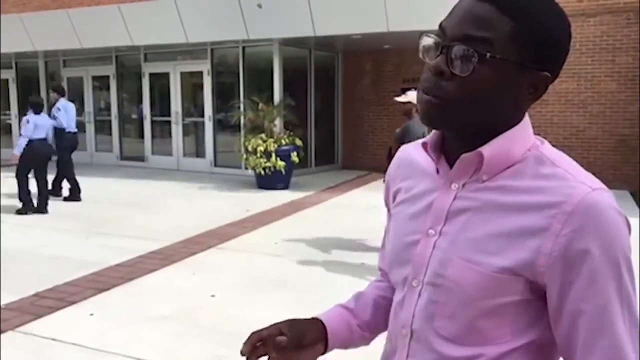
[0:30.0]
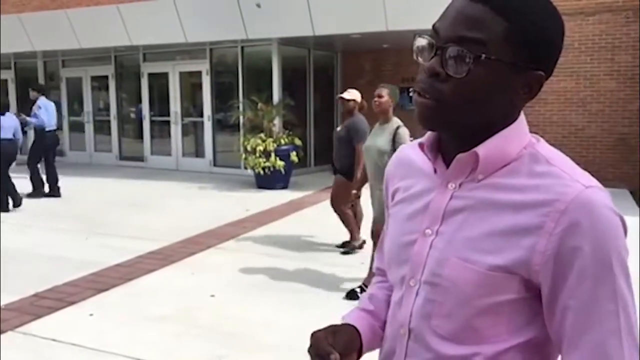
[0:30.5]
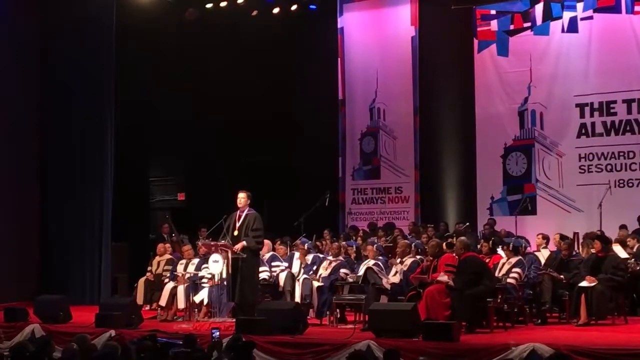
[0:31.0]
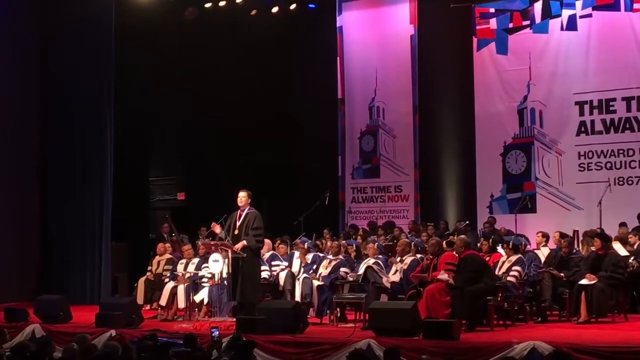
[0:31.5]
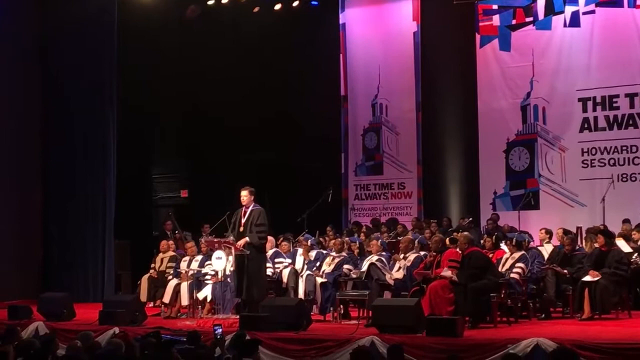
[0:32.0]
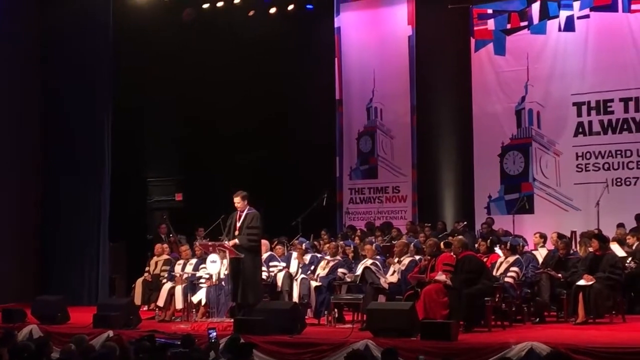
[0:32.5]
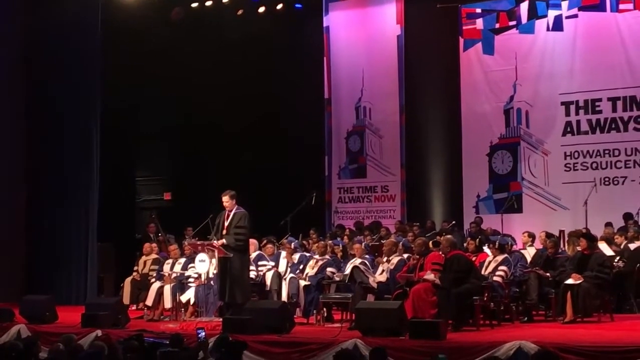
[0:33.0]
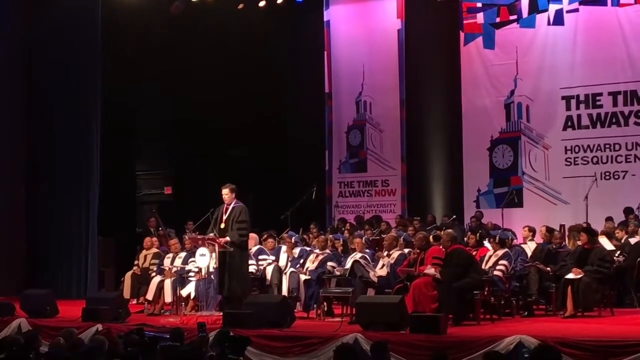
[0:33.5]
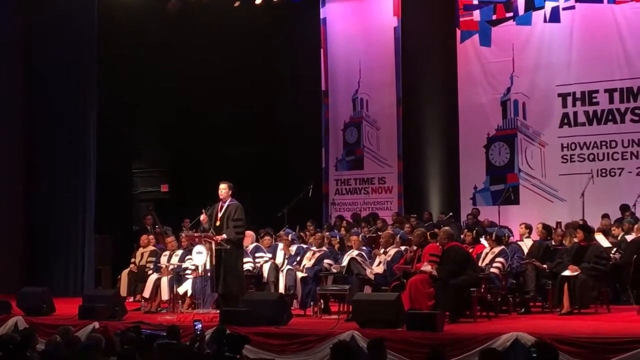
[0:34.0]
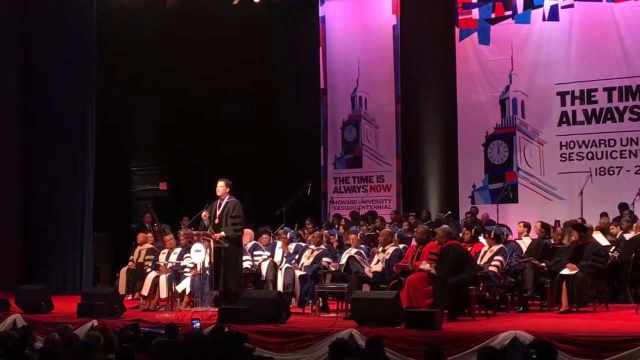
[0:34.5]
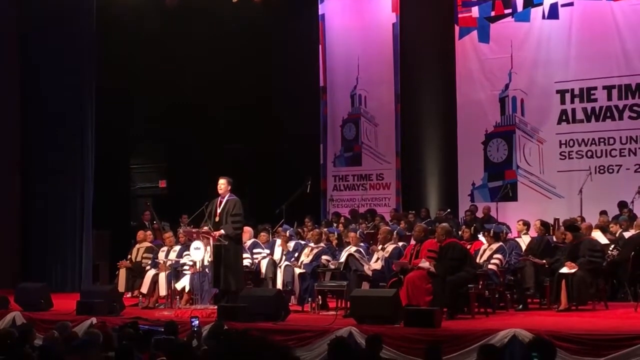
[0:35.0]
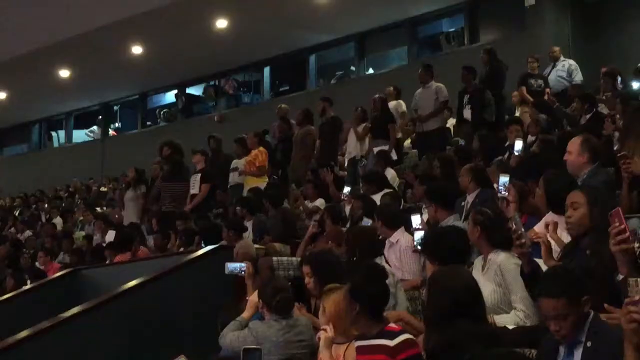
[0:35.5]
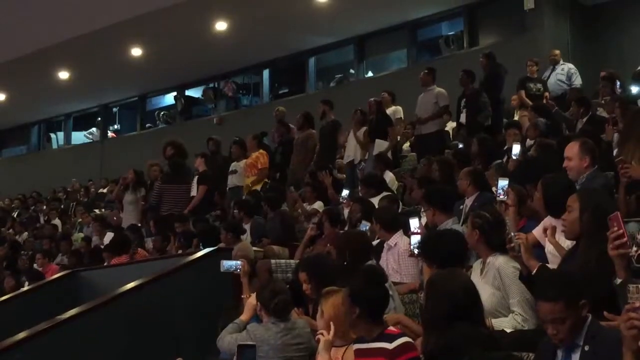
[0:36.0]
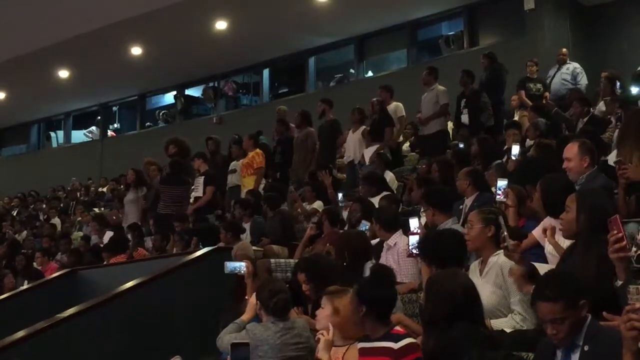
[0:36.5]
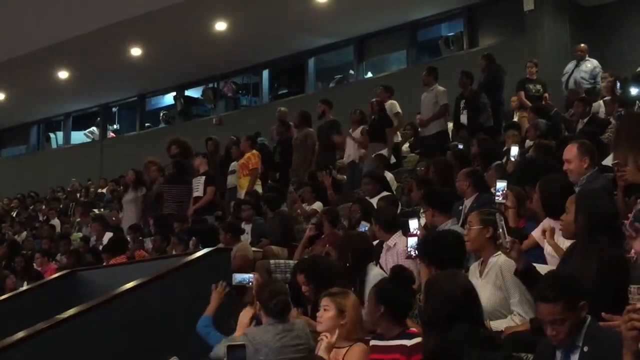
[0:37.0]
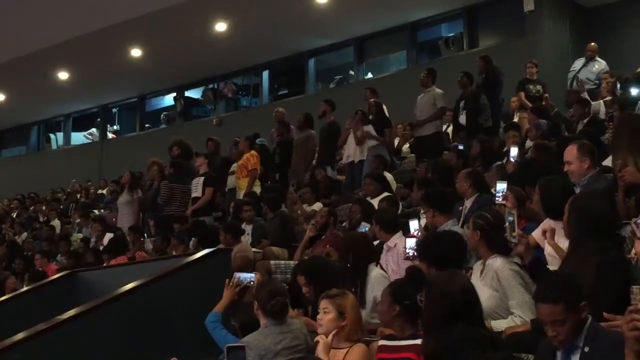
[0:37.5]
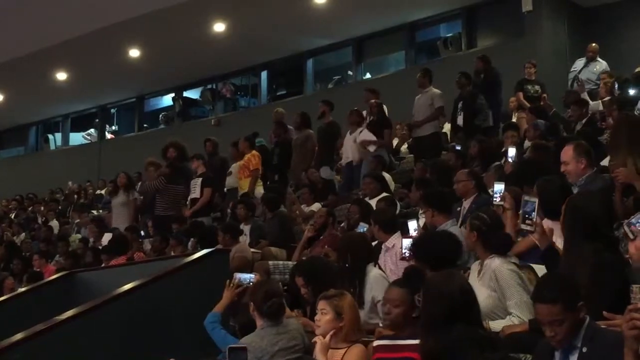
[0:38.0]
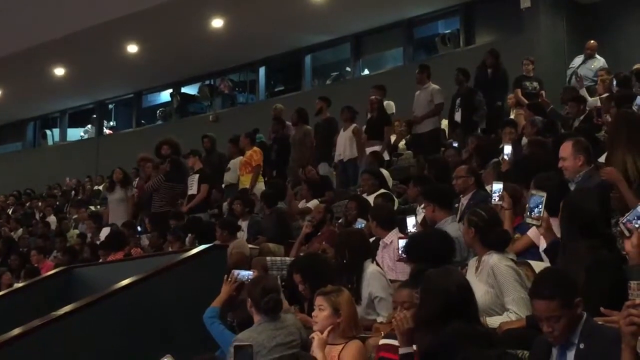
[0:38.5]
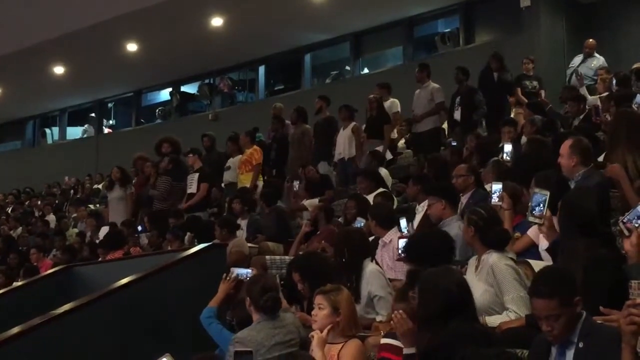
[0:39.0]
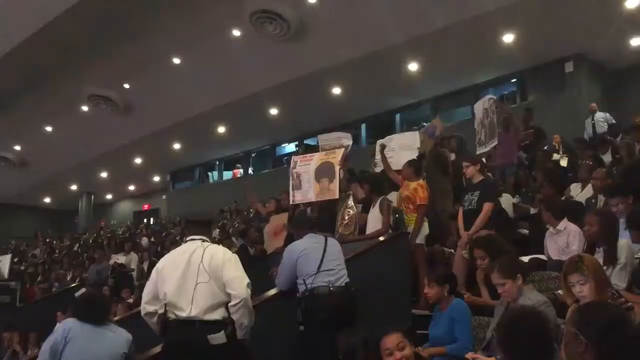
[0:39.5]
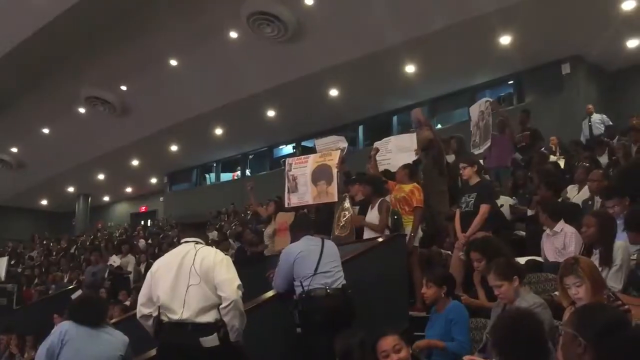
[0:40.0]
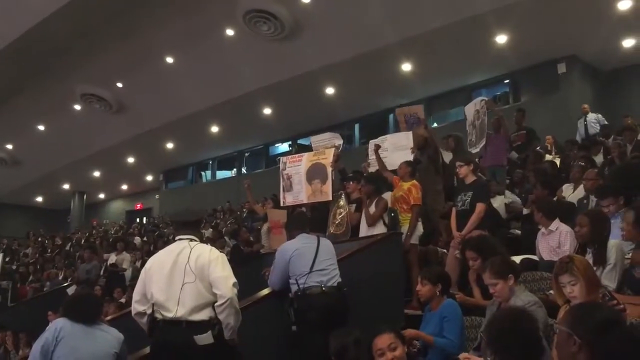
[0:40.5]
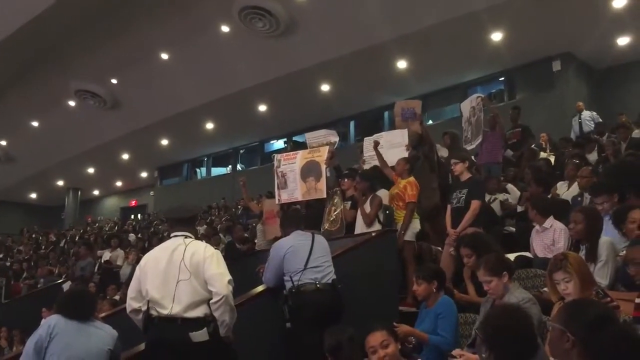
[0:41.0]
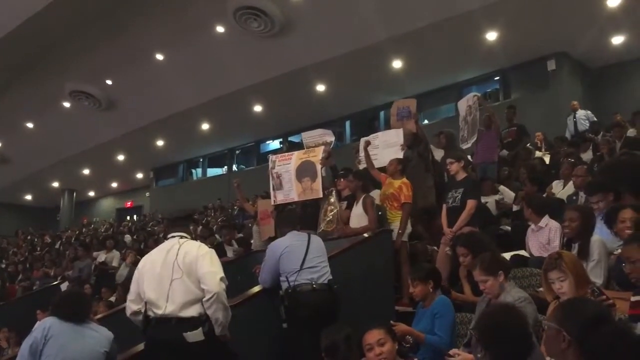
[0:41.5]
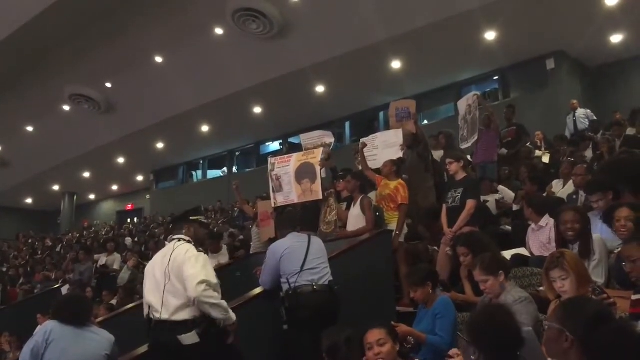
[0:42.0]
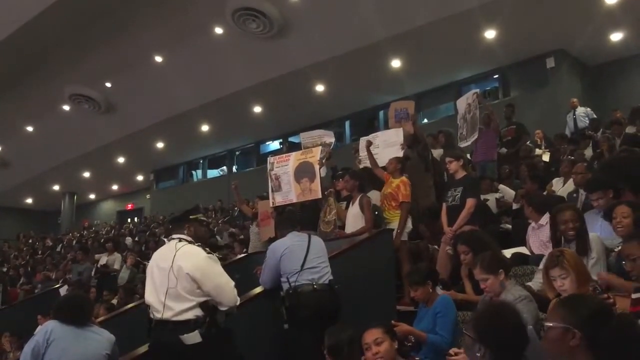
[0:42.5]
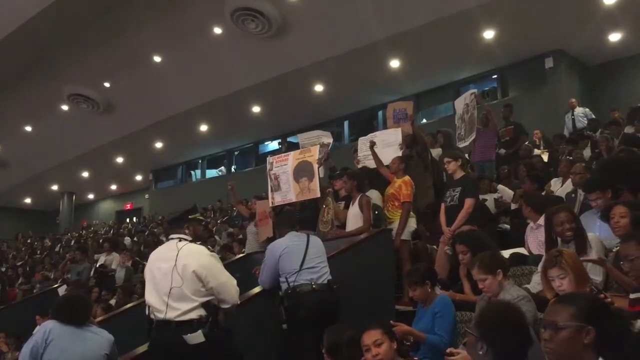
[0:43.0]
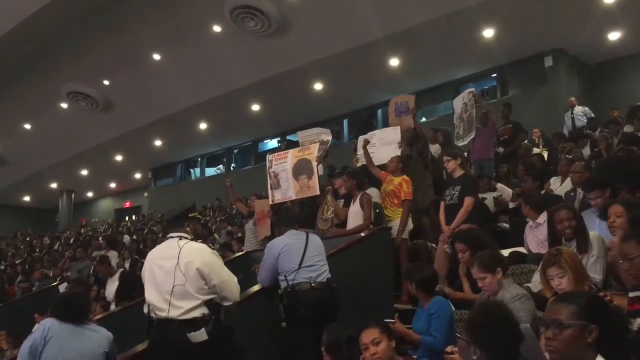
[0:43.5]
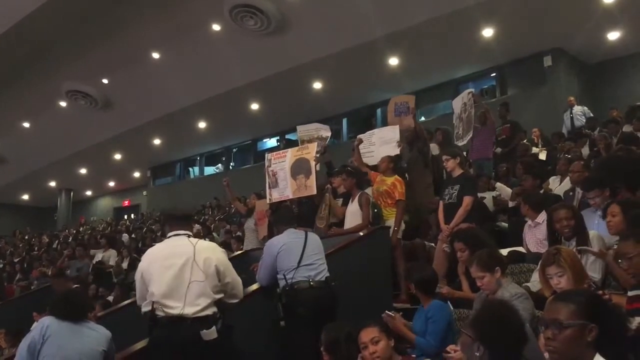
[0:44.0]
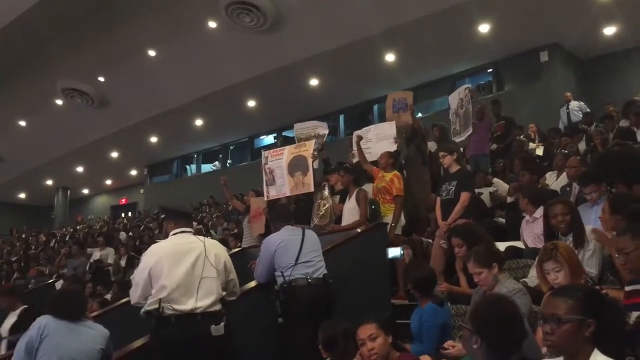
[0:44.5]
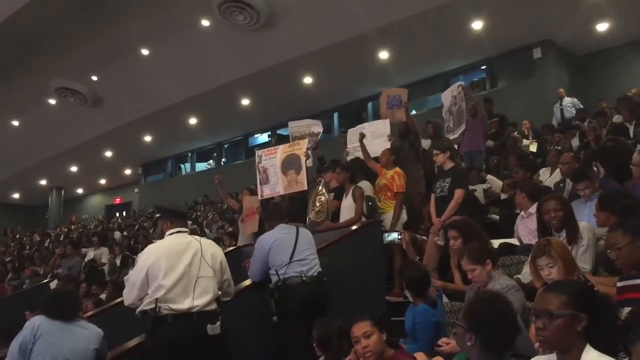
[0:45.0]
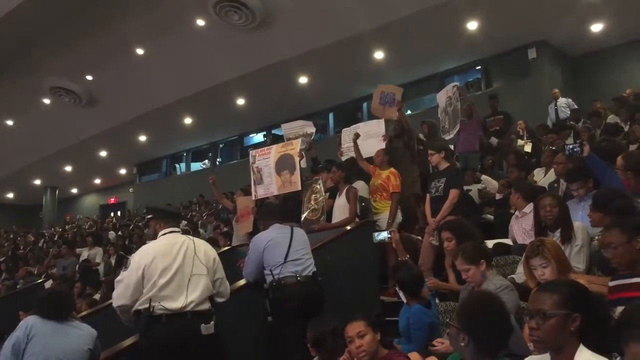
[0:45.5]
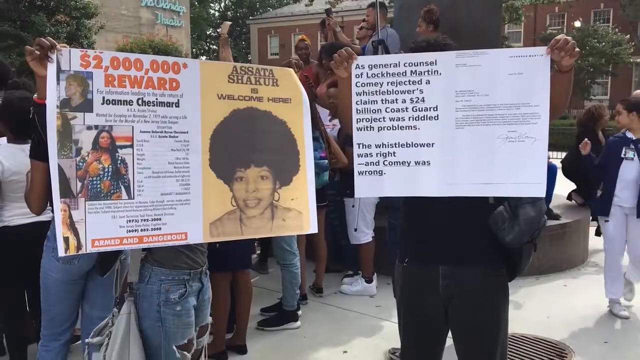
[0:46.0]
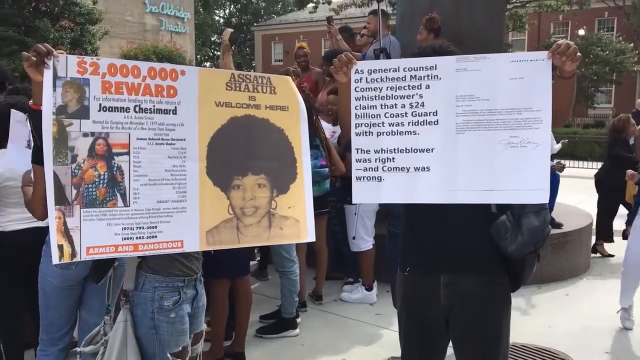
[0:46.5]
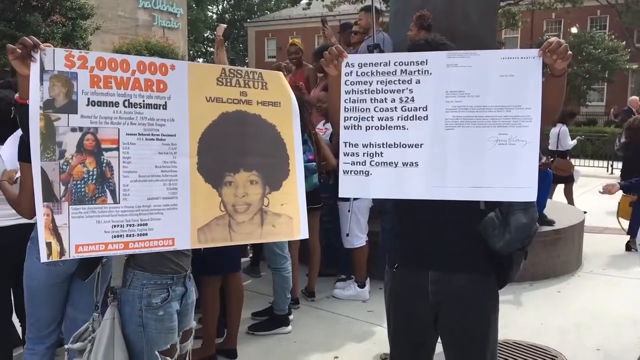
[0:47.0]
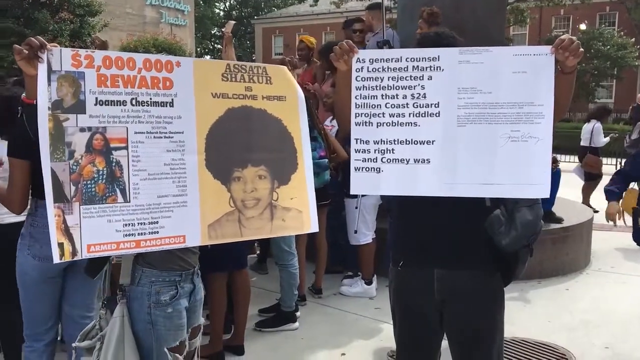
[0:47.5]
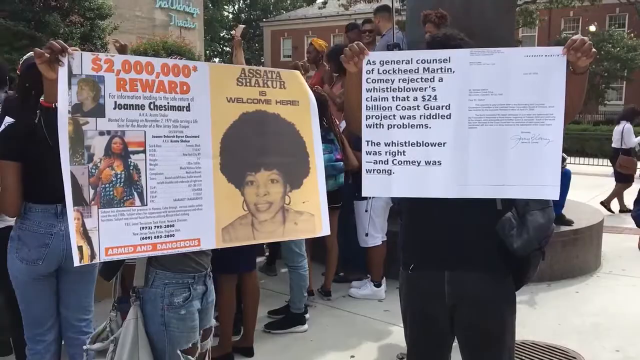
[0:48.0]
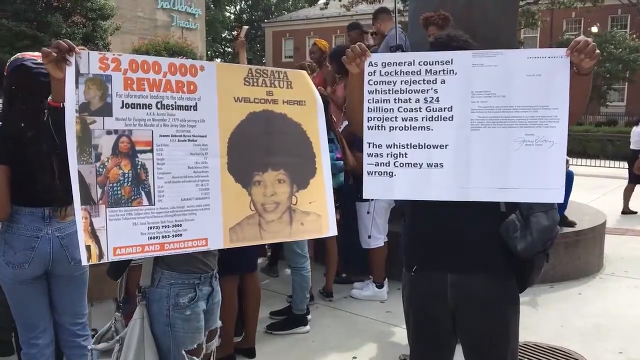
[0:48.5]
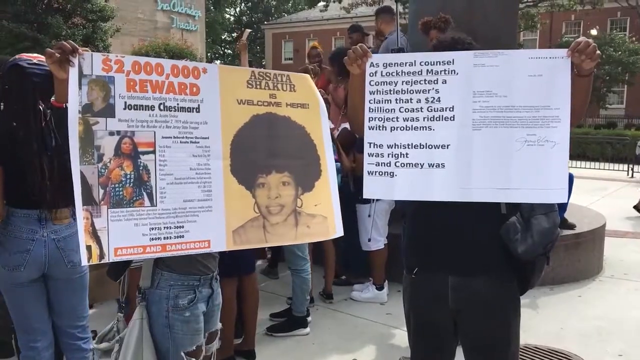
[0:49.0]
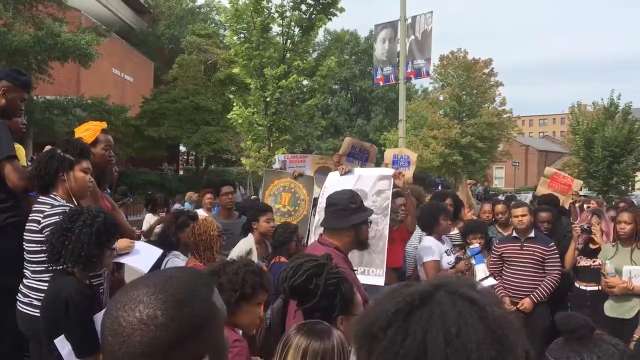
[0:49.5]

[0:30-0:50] The event could be a graduation or some other kind of ceremony. Inside the auditorium there seems to be a protest going on, with people holding up signs; "$2 million award" appears, along with the words "the time is always now." The celebration is of Howard University's sesquicentennial, and the protest continues in the back. The crowd inside the auditorium is predominantly African American. Outside, the protest continues, with people holding up signs in a very orderly group. Apparently all of the professors are on stage, with a red carpet. A man at the podium is speaking when he is interrupted by a fairly small group, maybe a dozen or so people, holding up signs, protesting during what appears to be a ceremony celebrating the Howard University sesquicentennial, 1867-2017. Everyone inside is very orderly, and security guards are standing by as the protest goes on. The protest then seems to move, or be moved, outside the auditorium.